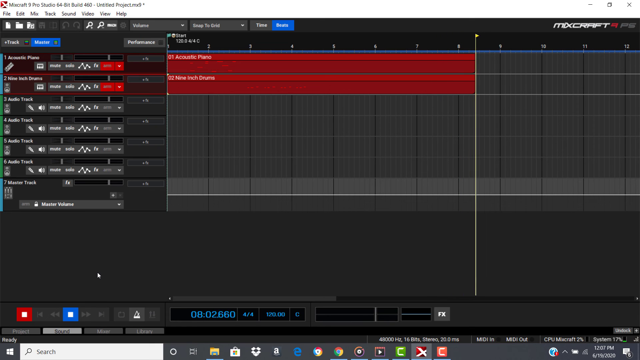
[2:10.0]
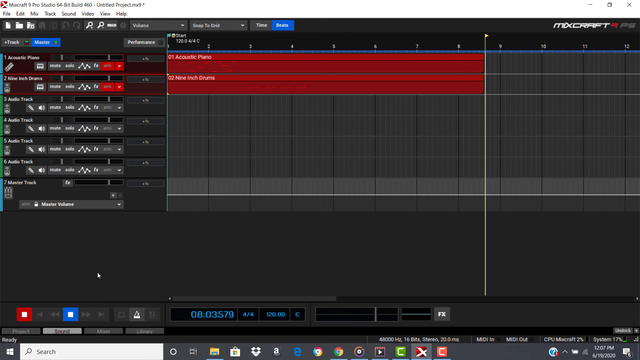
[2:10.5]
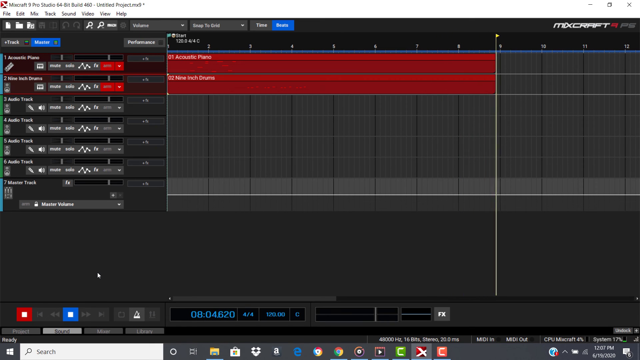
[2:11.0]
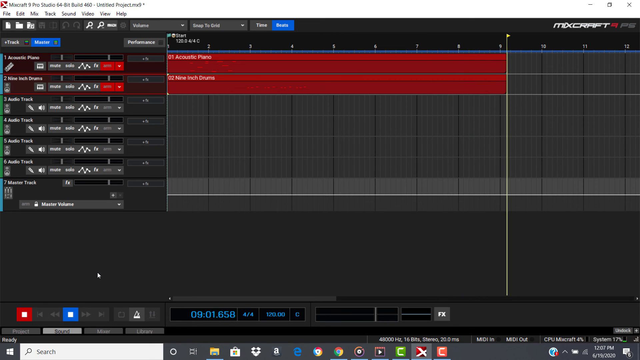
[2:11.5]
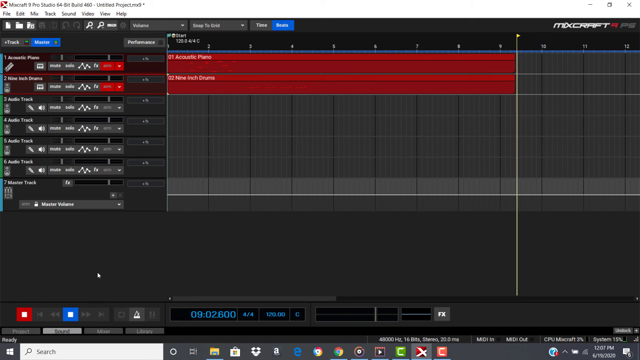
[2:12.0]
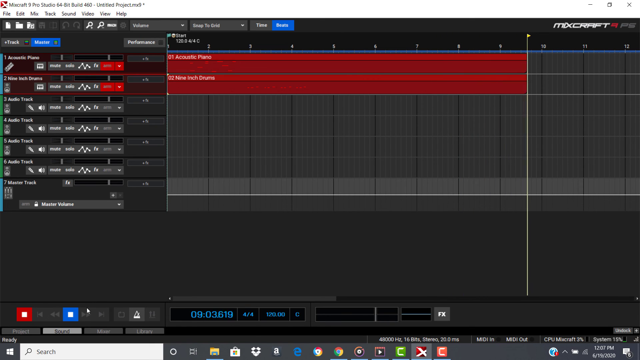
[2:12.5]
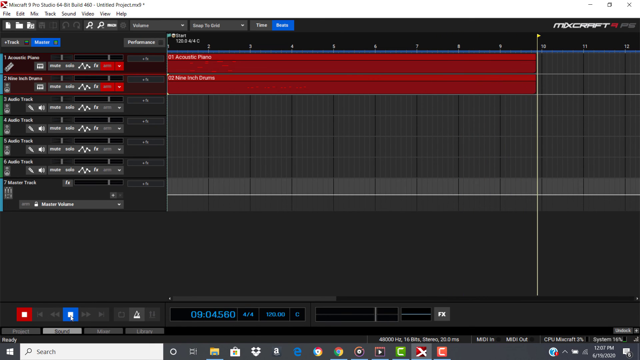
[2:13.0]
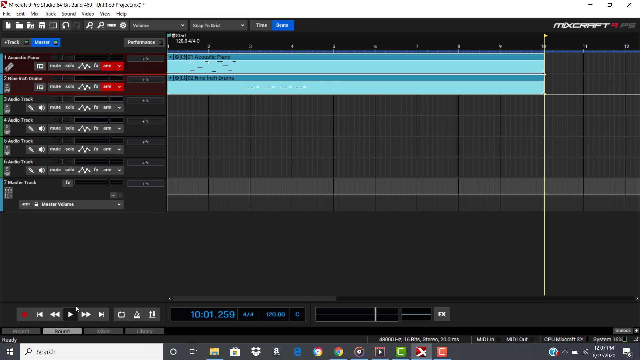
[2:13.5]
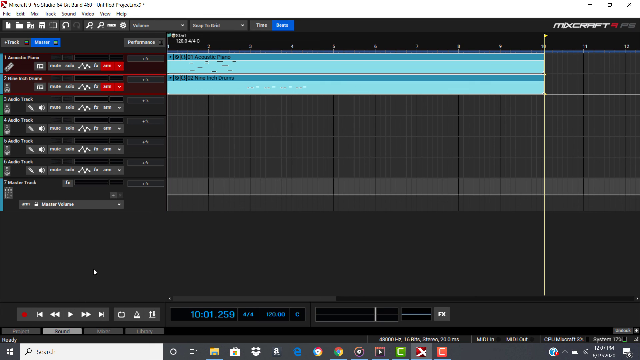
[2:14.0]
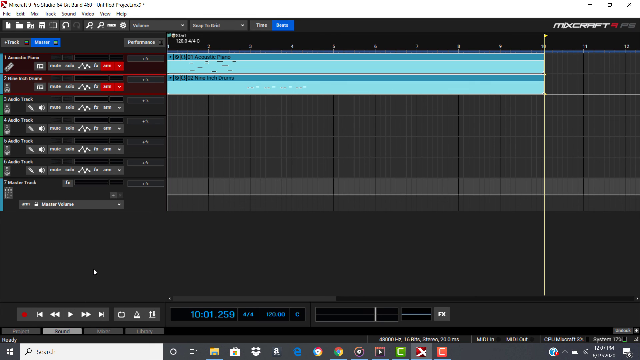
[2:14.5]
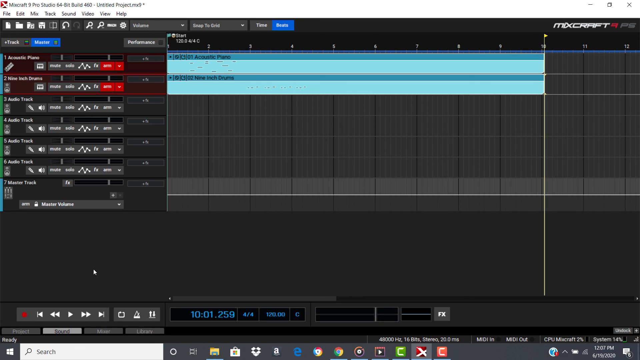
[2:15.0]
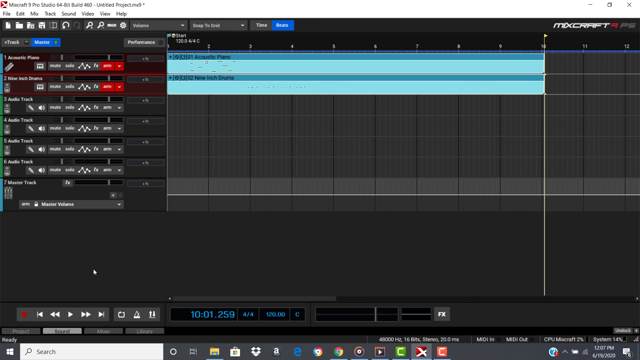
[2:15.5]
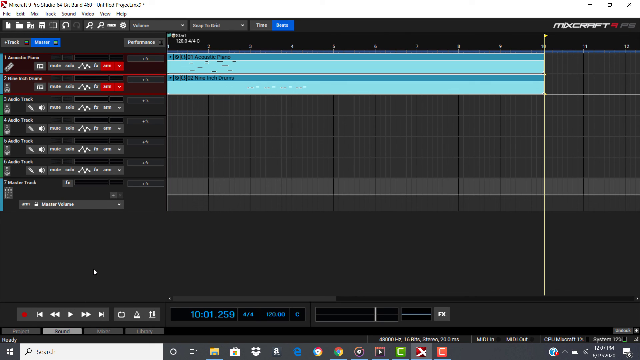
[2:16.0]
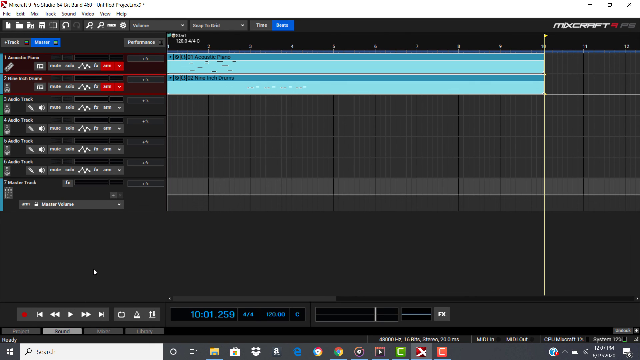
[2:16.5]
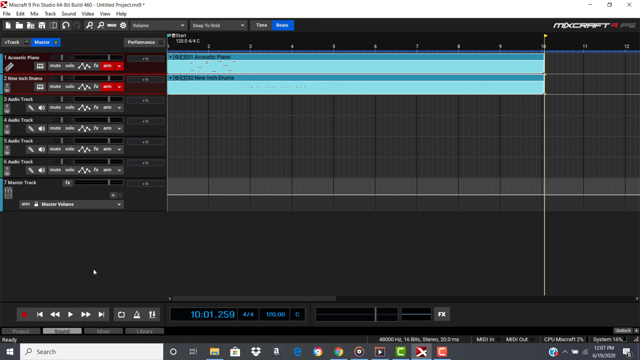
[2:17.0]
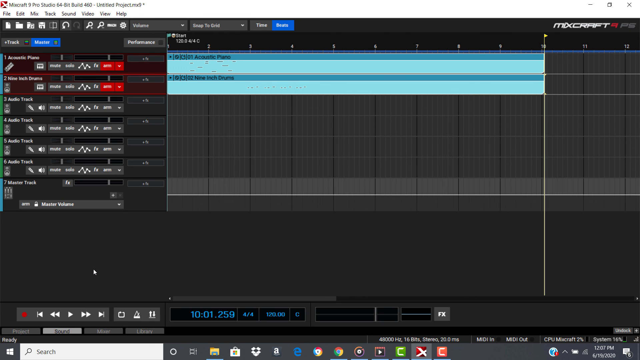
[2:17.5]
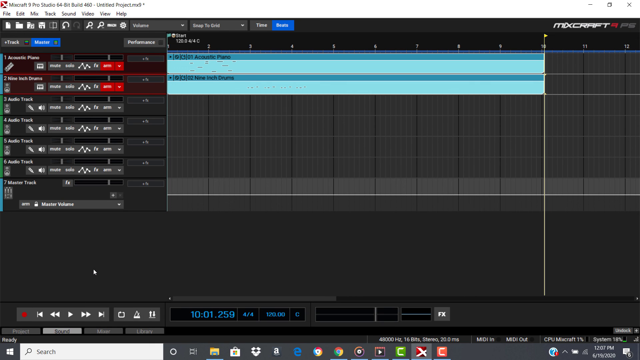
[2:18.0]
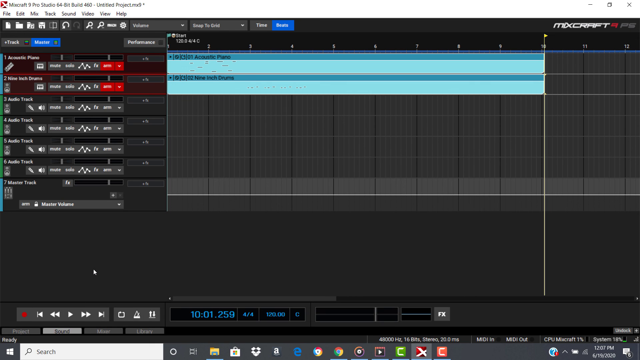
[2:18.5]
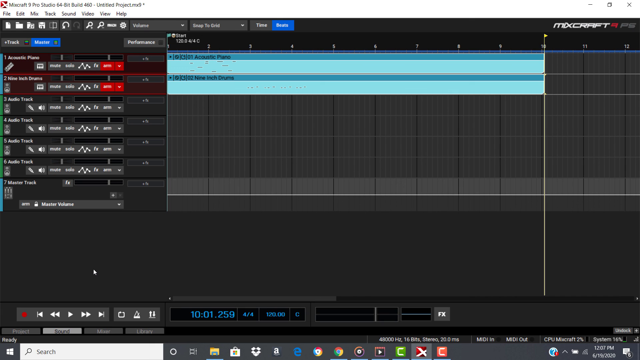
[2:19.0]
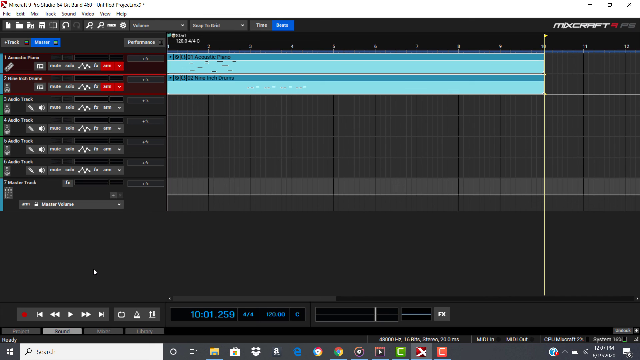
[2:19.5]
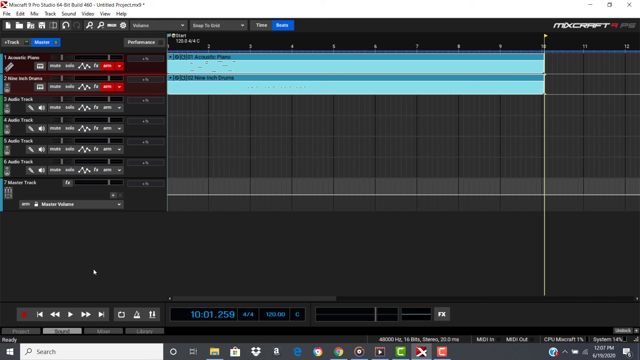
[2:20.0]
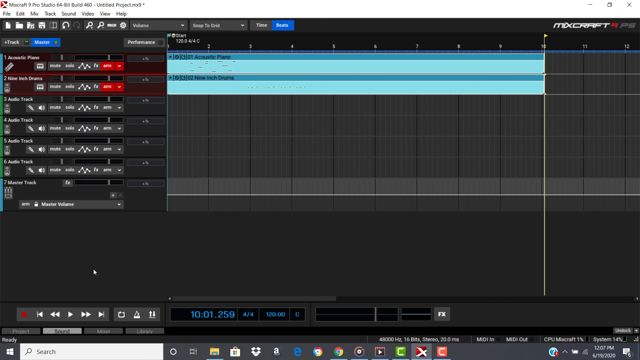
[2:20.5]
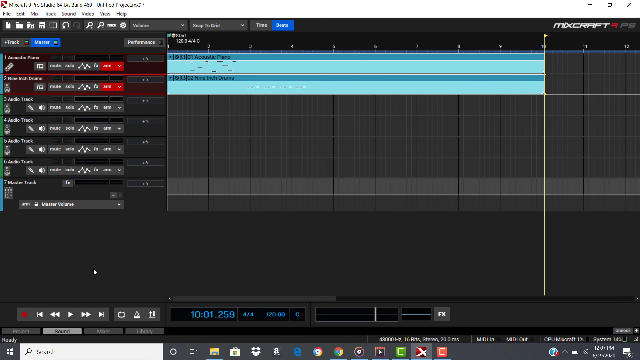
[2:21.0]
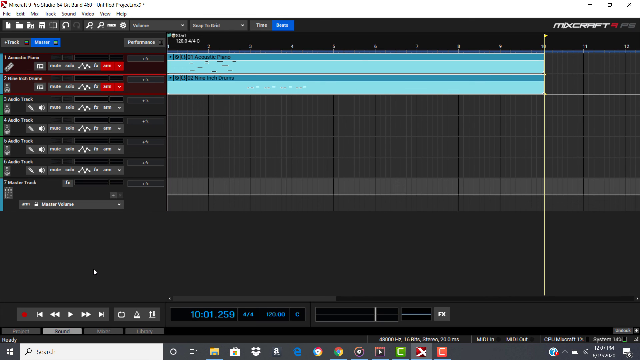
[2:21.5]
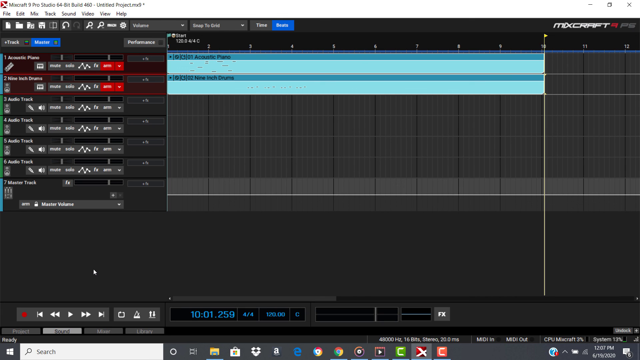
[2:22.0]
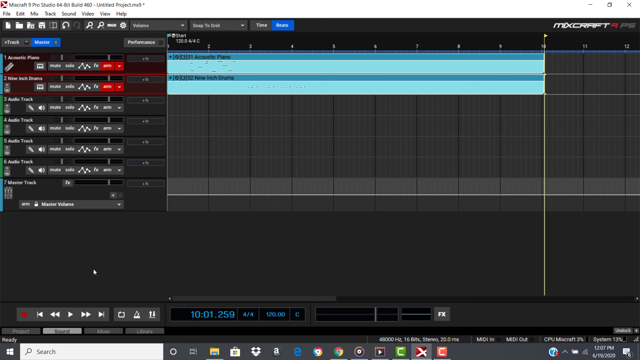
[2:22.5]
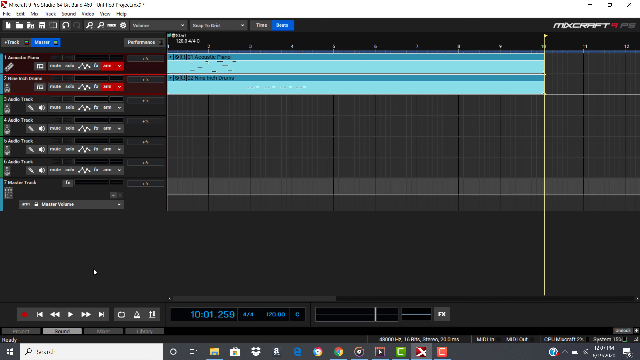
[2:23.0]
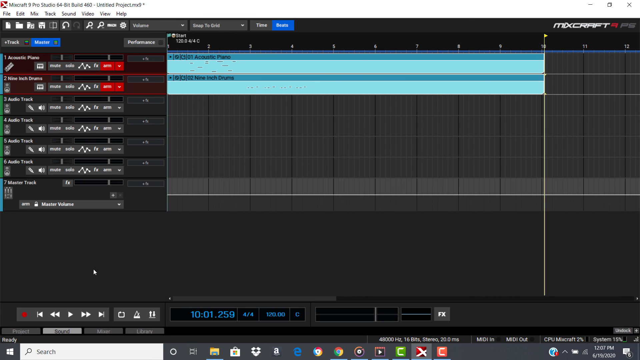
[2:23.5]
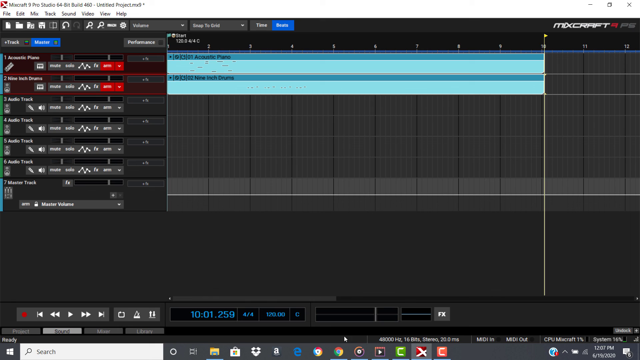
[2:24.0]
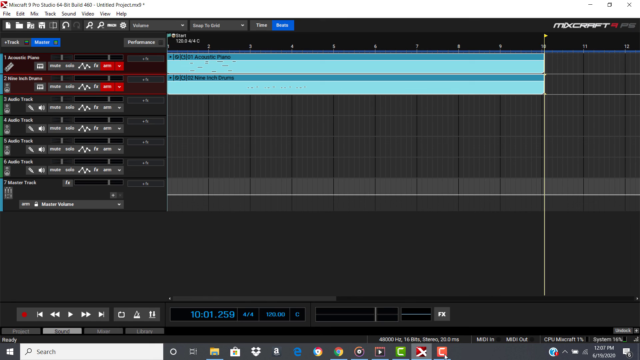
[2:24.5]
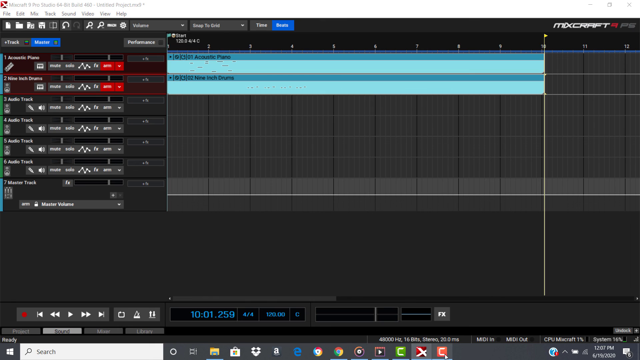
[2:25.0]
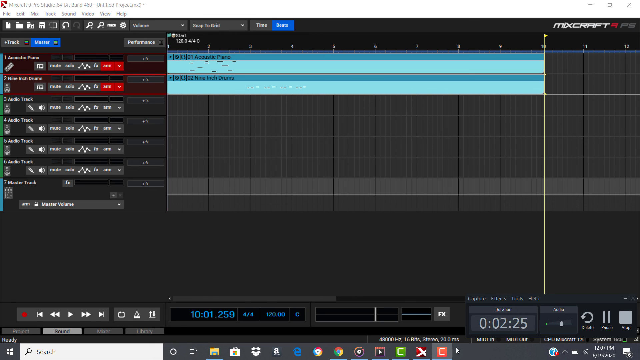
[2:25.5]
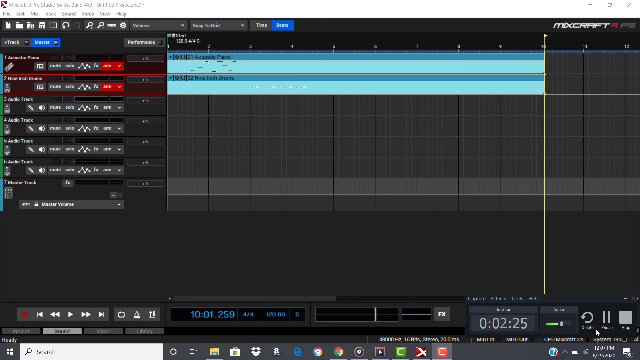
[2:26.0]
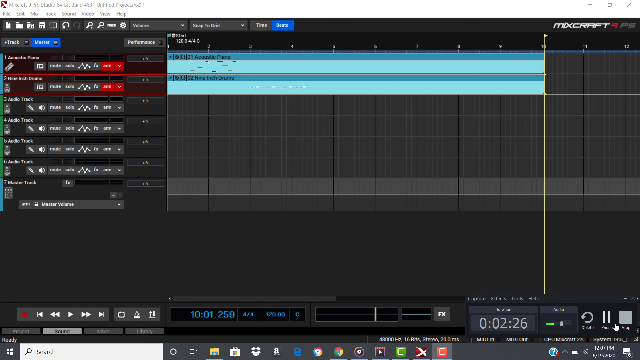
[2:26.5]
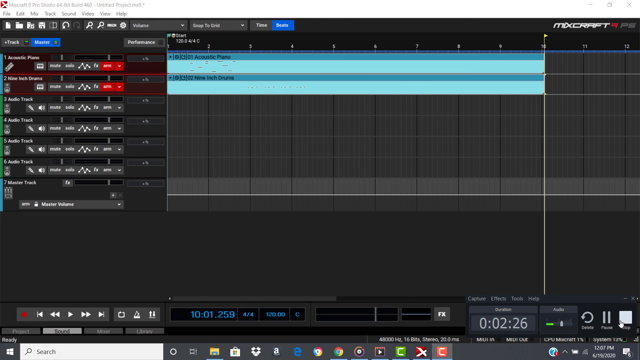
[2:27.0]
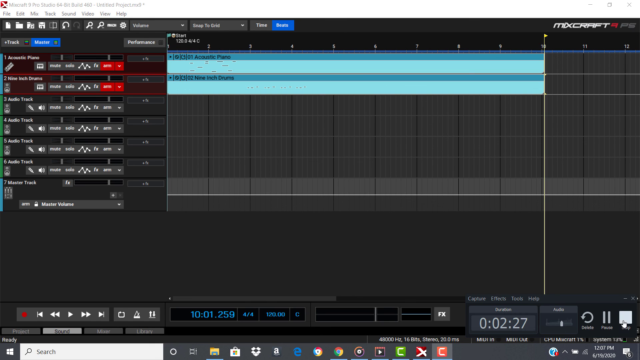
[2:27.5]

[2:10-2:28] A recording of someone's computer shows the upper right corner saying "MixCraft"; it looks like some kind of sound software. The upper left corner has drop-down menus such as "File" and "Edit", with one that says "Mix" and one that says "Sound". The left side of the screen has vertical columns 1 through 7 labeled things like "Acoustic Piano" and "Audio Track". About three-quarters of the page is taken up by vertical columns 1 through 12, the first two of which are red. A white vertical bar moves from left to right across the page. The cursor clicks a little box down below, and the red turns to blue. The cursor then moves very fast across the page, clicks somewhere else, and the color changes to a different one.